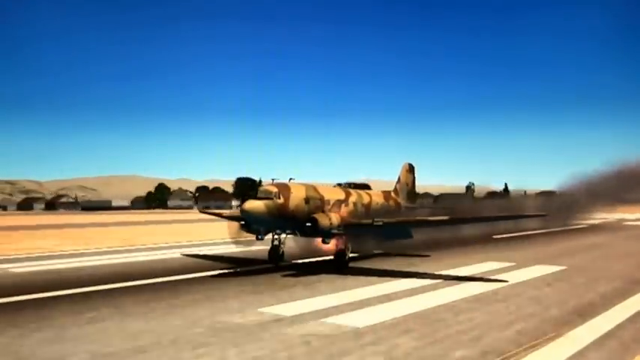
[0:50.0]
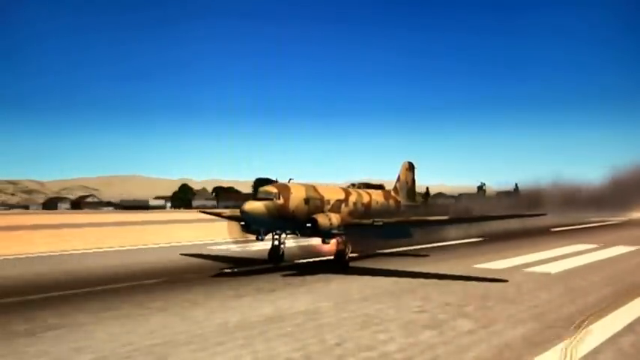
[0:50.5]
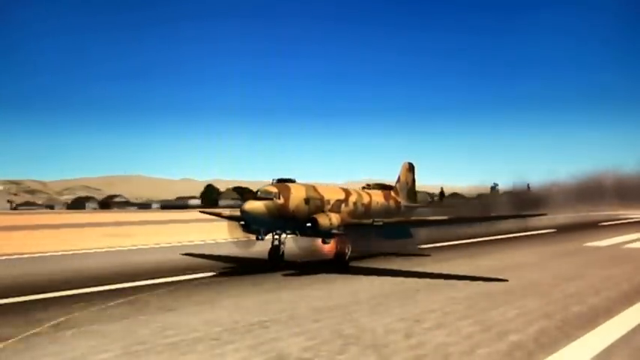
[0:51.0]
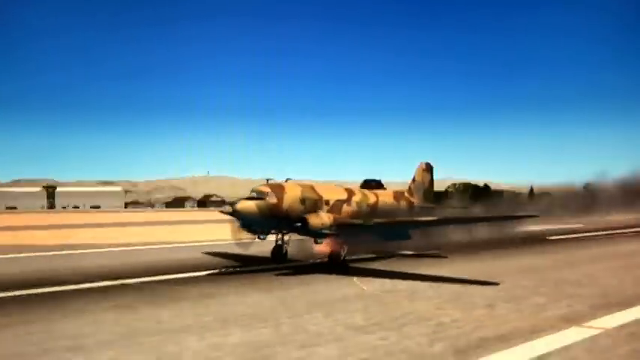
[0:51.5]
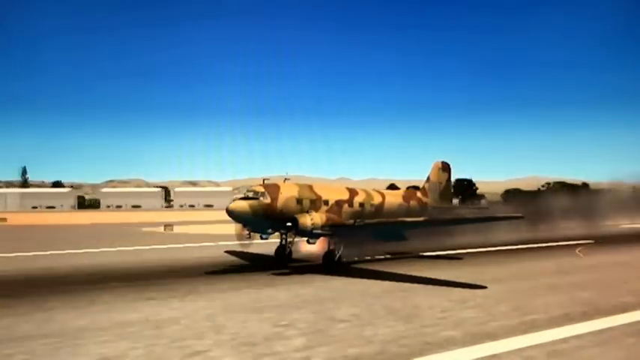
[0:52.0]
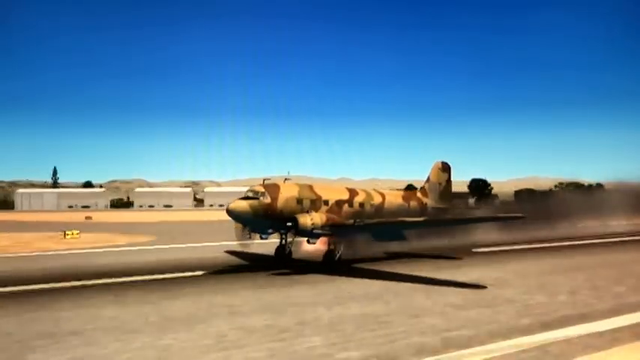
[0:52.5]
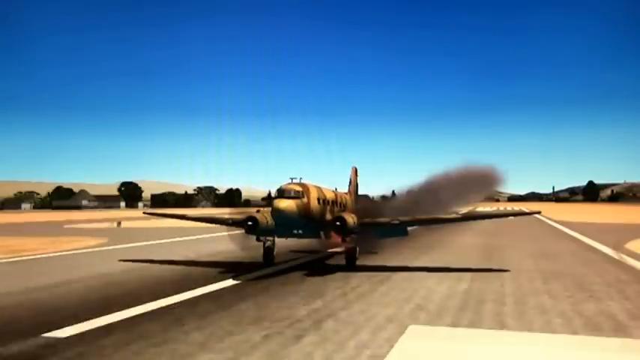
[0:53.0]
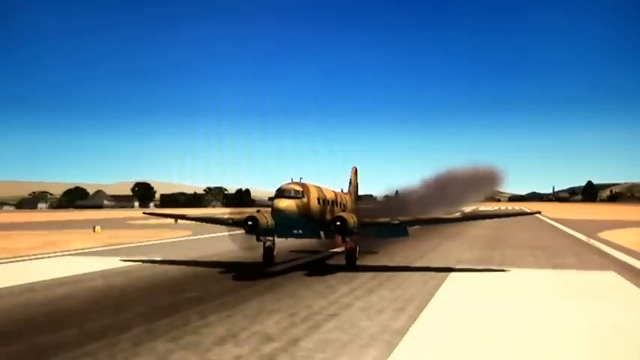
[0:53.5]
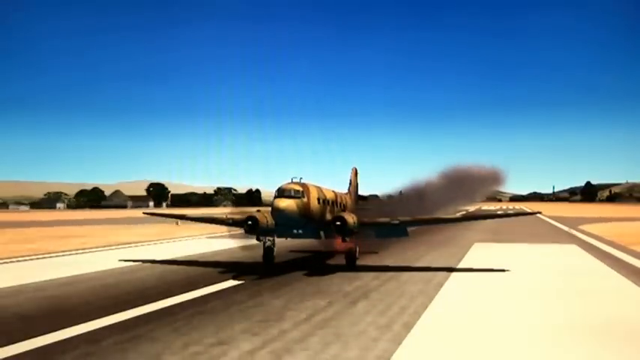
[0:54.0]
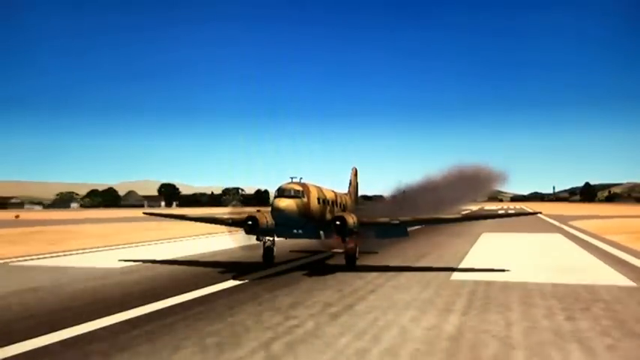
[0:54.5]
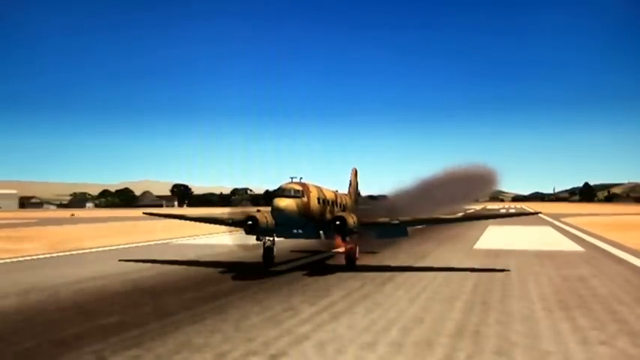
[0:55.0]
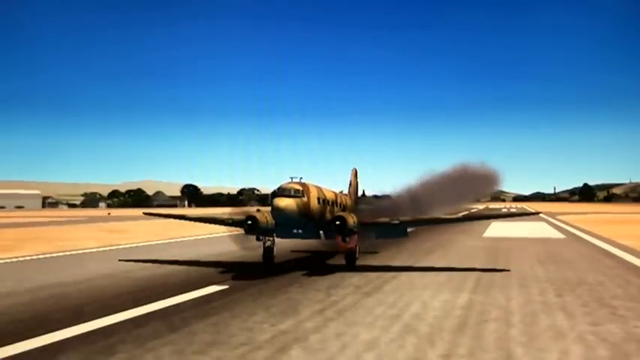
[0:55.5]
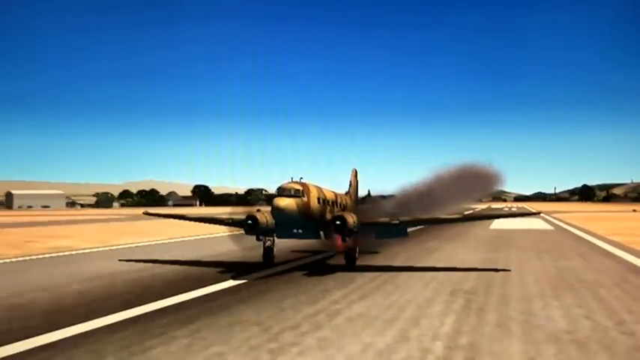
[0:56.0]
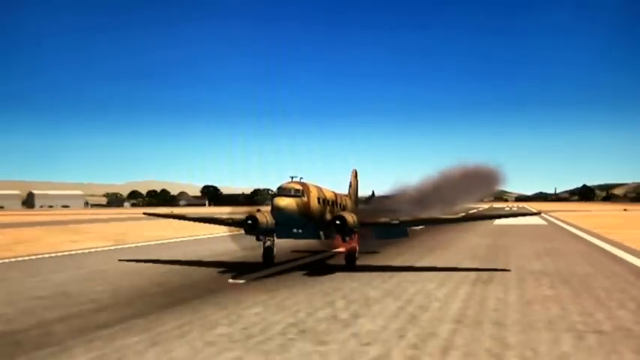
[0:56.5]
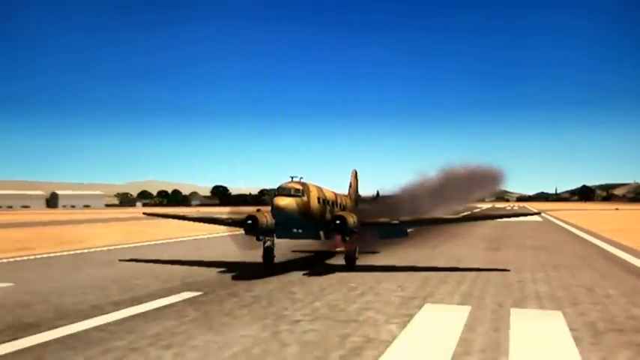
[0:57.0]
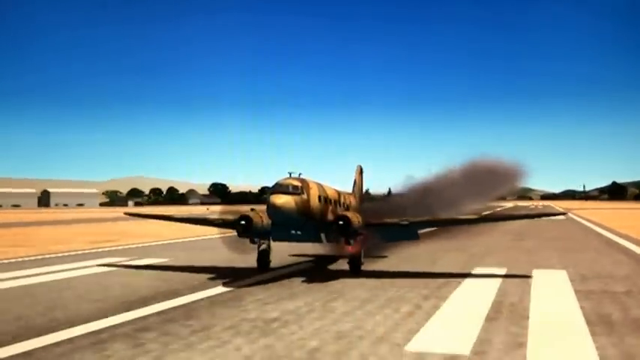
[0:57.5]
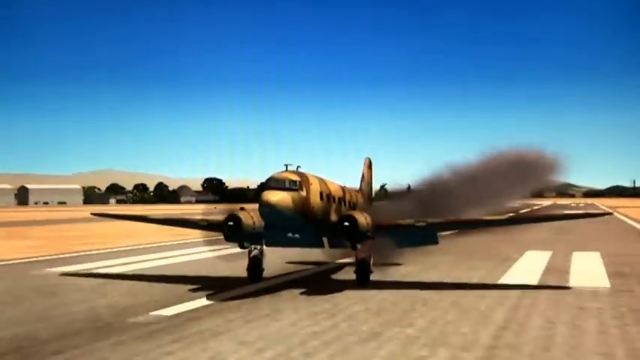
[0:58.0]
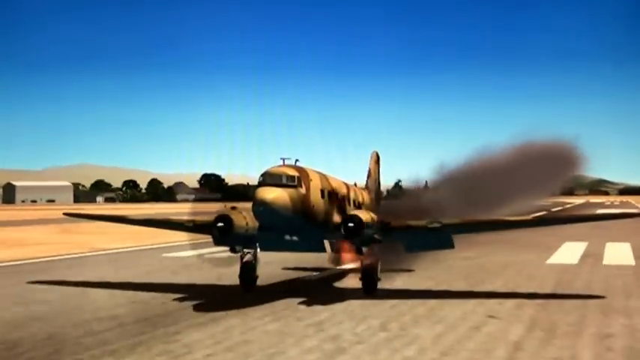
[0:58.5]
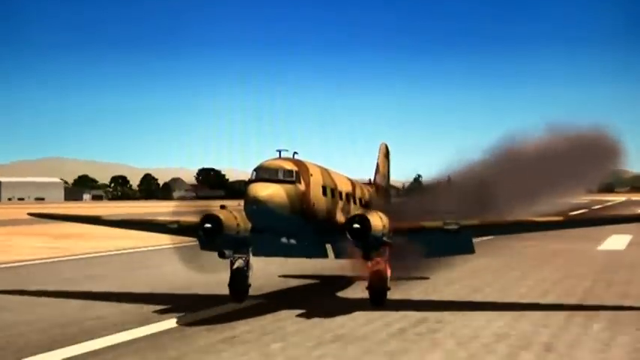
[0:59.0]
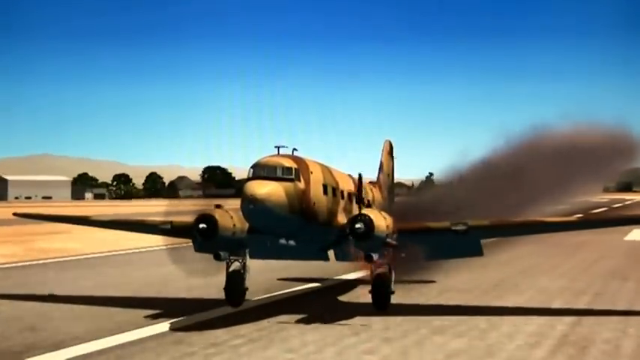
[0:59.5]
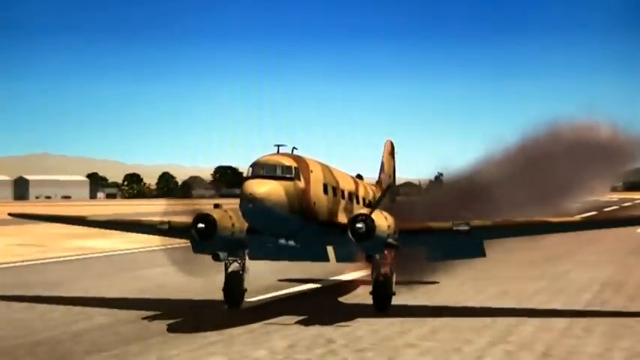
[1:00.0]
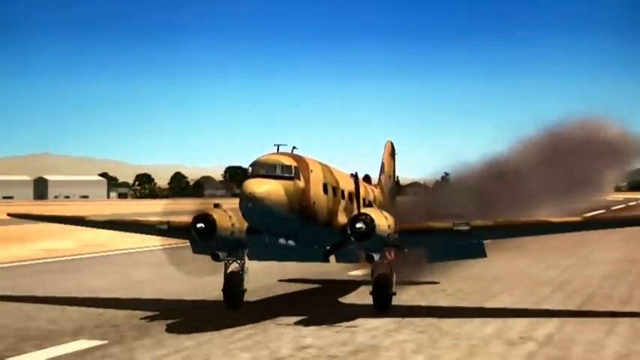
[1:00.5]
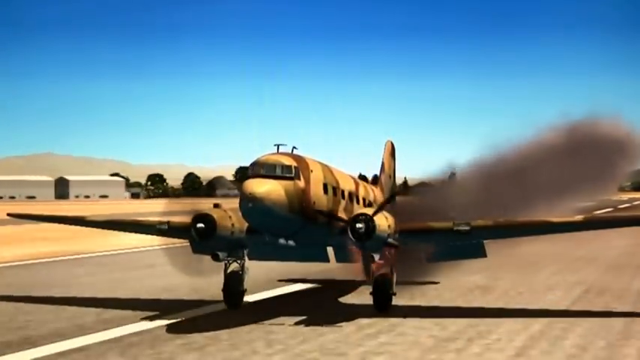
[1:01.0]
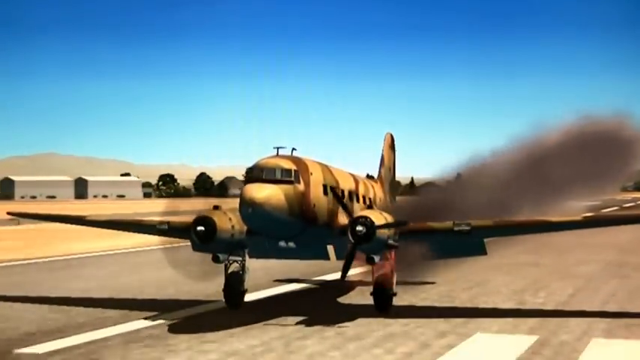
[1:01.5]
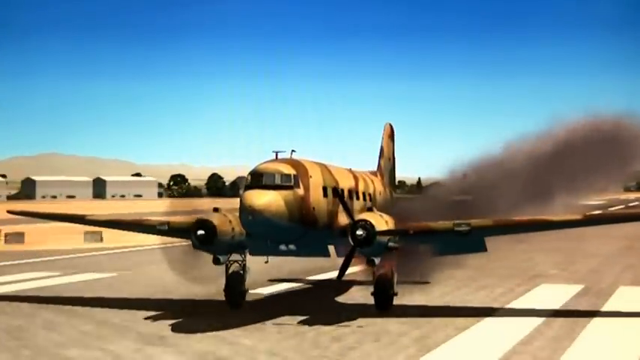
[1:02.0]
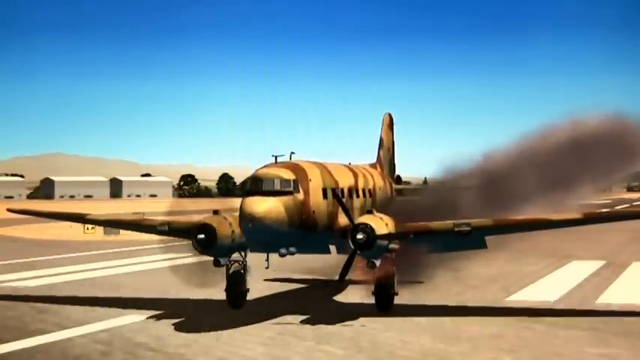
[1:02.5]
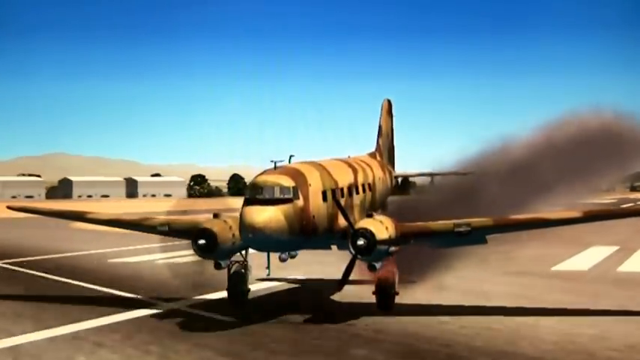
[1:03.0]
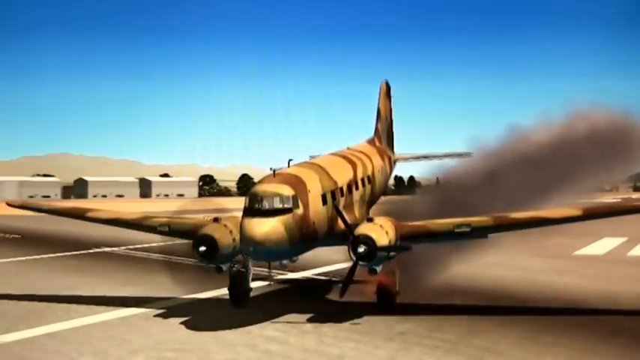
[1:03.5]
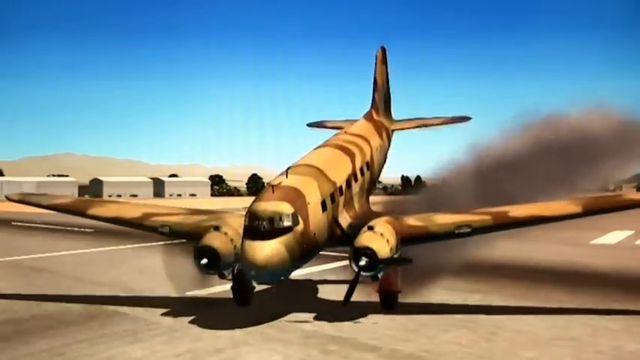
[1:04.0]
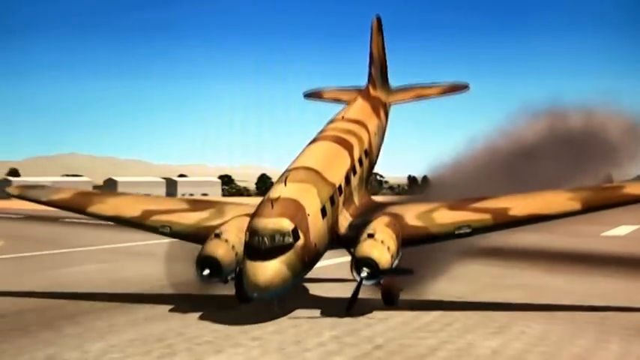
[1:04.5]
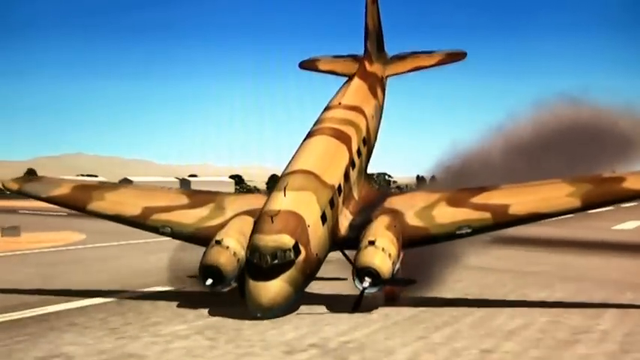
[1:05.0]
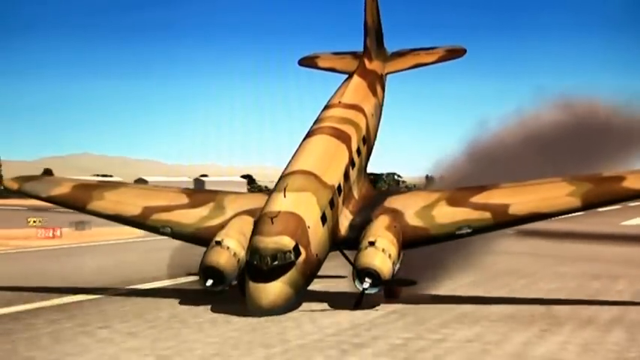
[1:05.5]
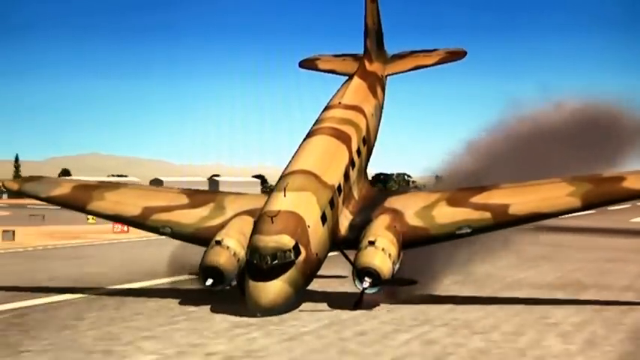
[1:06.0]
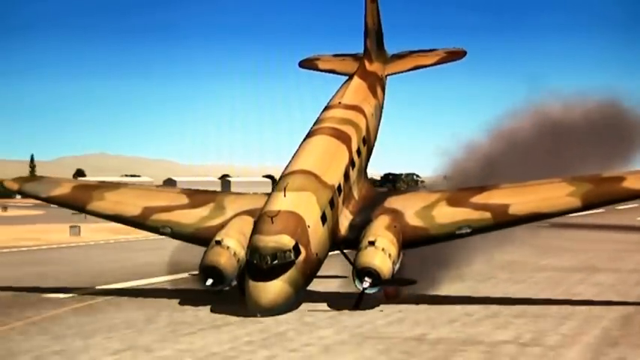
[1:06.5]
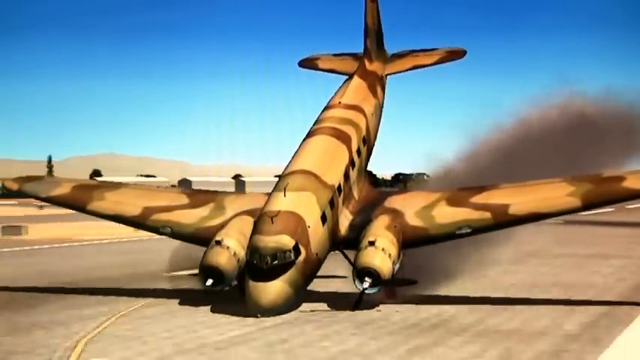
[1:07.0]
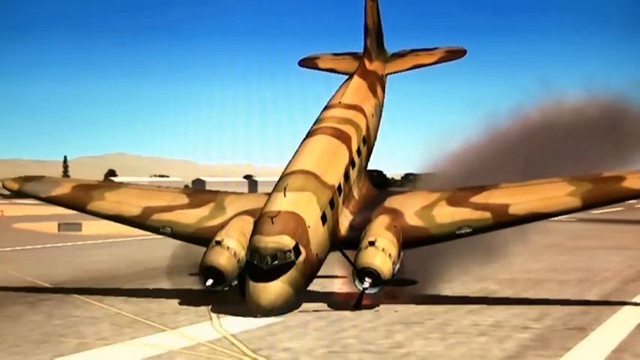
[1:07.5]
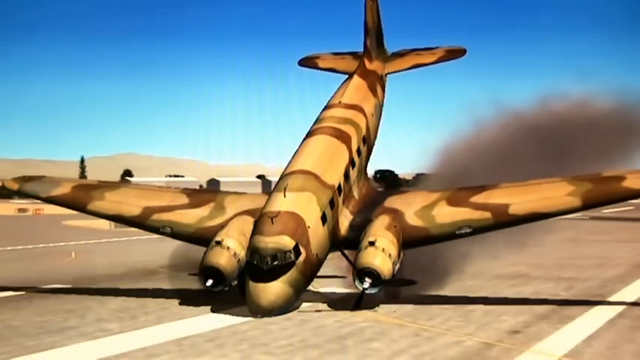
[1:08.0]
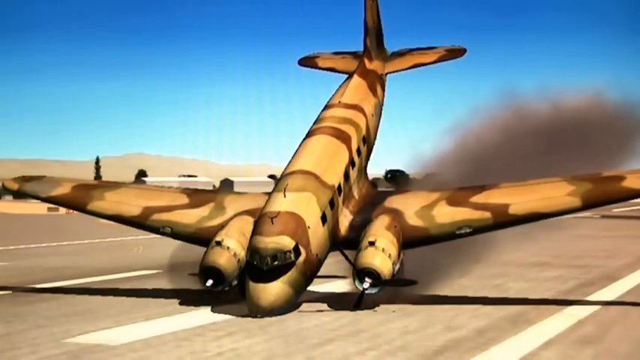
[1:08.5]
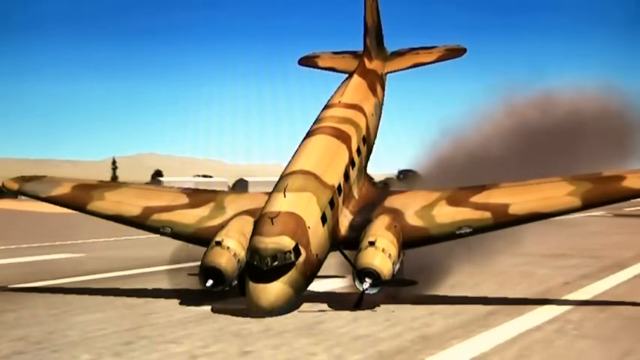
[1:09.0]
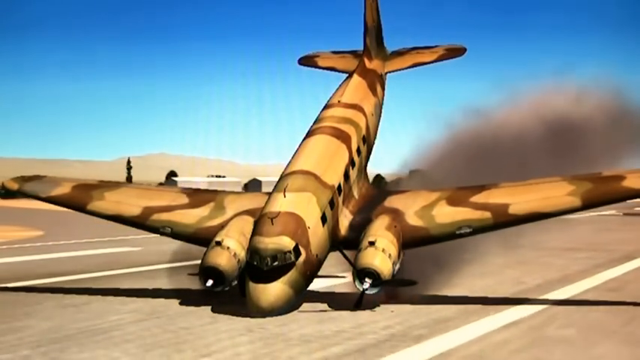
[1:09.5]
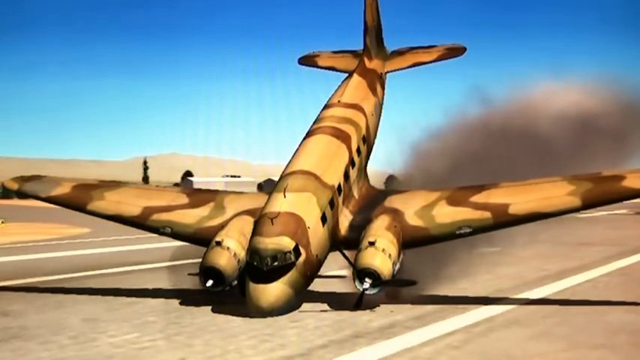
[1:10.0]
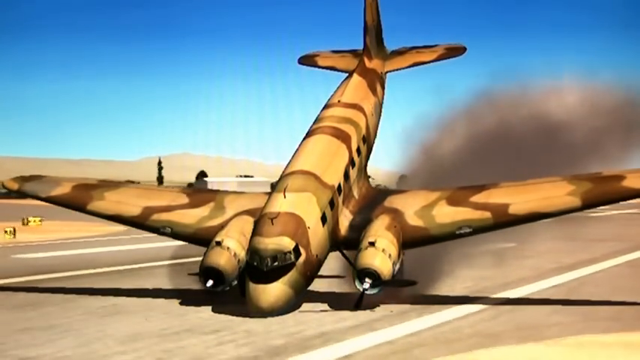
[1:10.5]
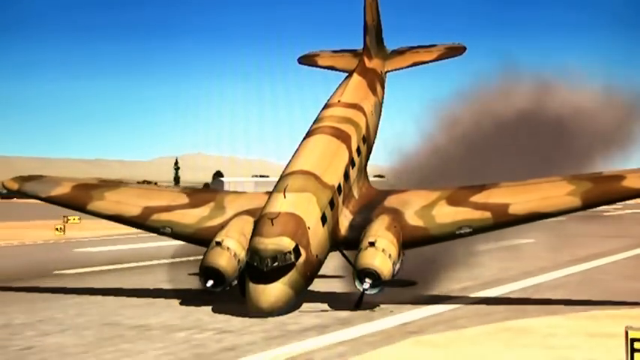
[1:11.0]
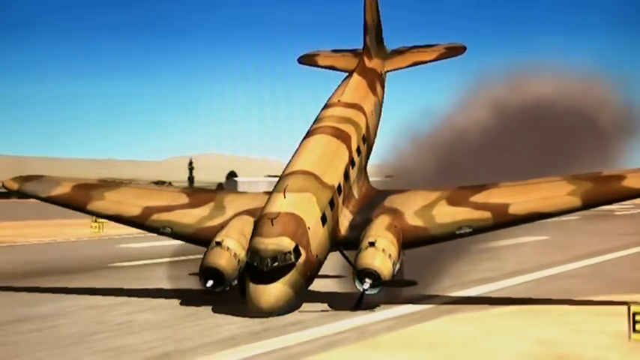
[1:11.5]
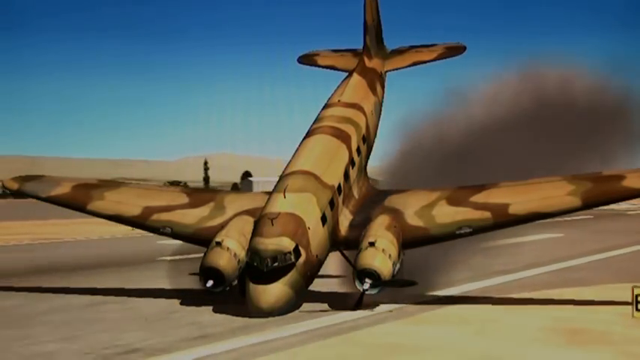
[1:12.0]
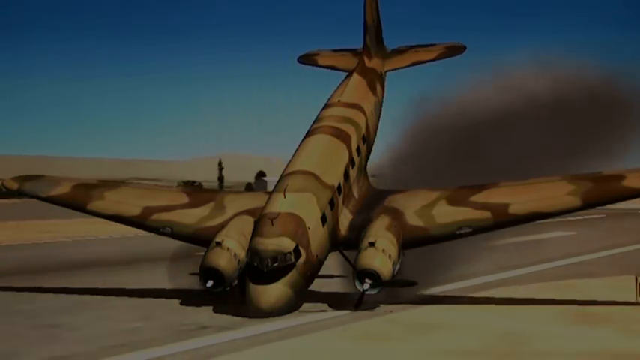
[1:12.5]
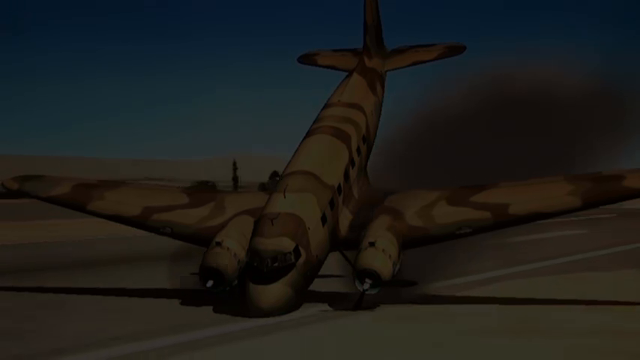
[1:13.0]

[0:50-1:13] In the aircraft video game, a plane camouflaged in brown and beige has its left wing on fire, with smoke trailing as it lands on an asphalt runway with white stripes. In the background are a desert environment with houses and hills and the blue sky. The plane rolls down the runway as the camera angles switch back and forth, and the plane is safe. As it slows down, the flaps are visible; then the nose topples over and the tail rises into the air, which does not look right. The left engine's prop is no longer spinning, while the right engine is still going at full speed as the plane eventually comes to a stop on the runway. Houses and occasional trees are in the background, but mostly a lot of sand and dirt.